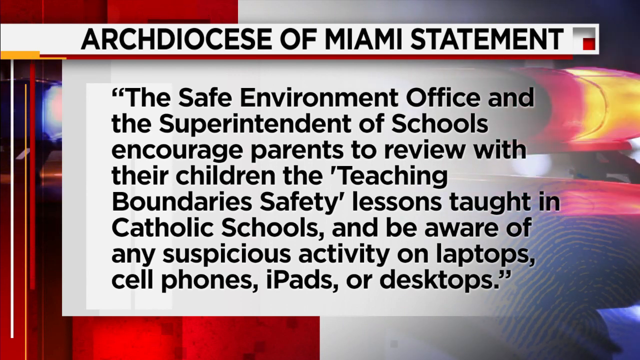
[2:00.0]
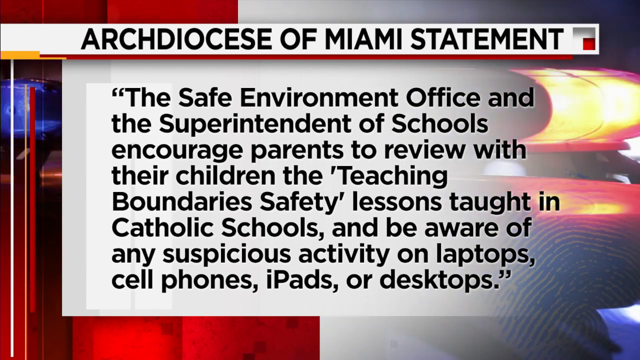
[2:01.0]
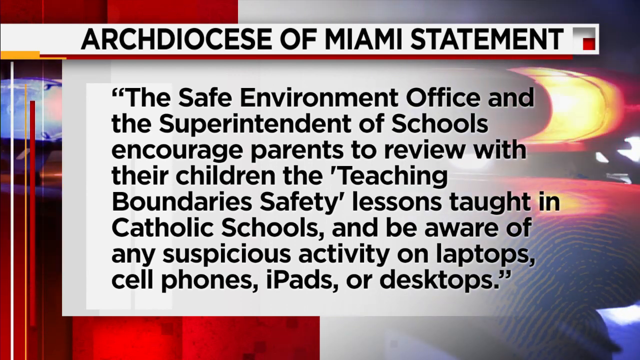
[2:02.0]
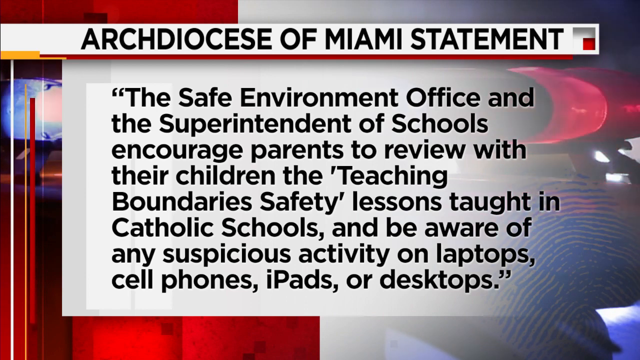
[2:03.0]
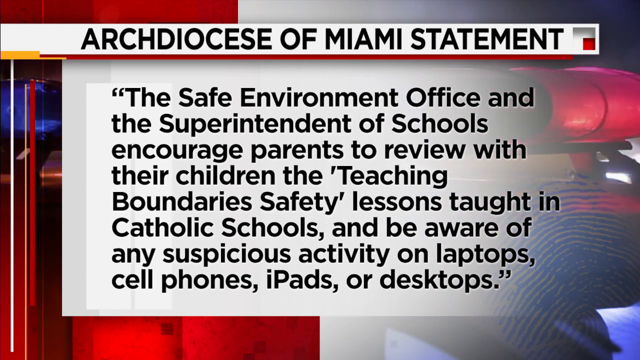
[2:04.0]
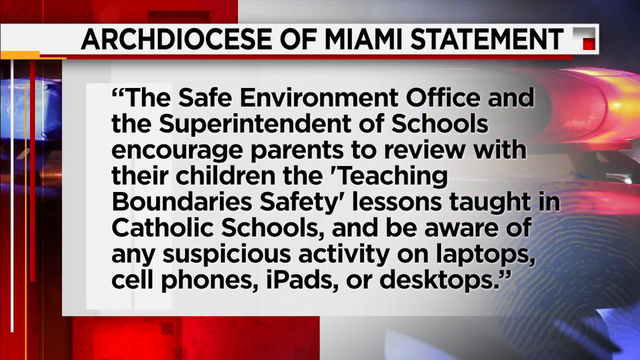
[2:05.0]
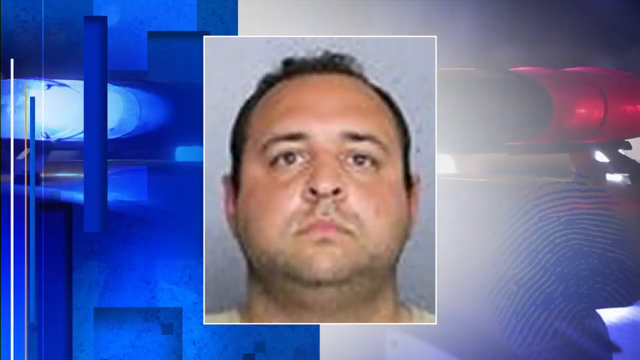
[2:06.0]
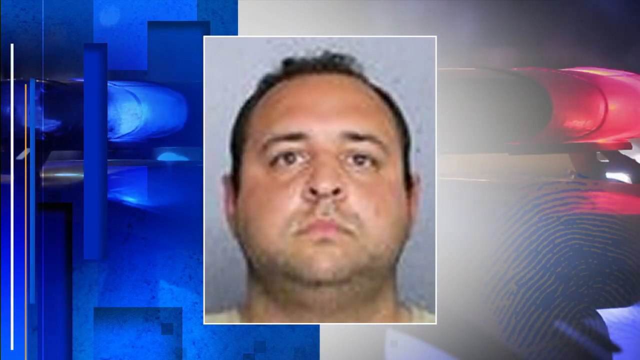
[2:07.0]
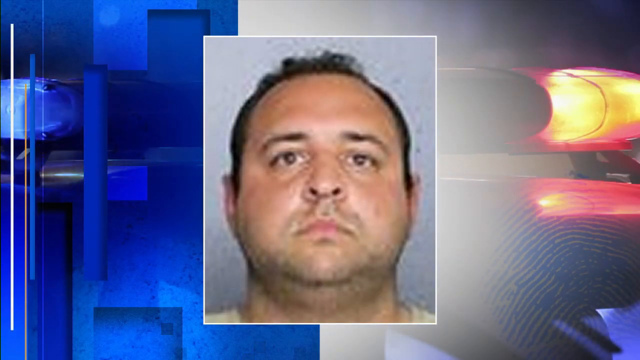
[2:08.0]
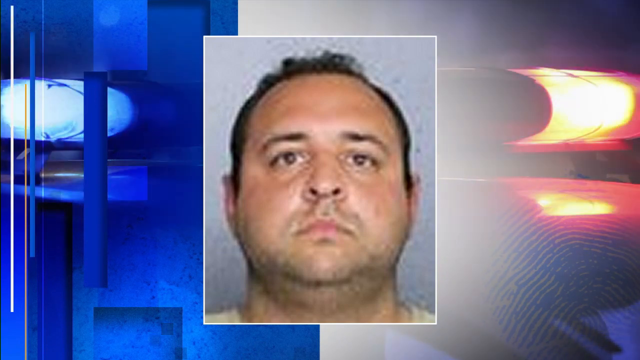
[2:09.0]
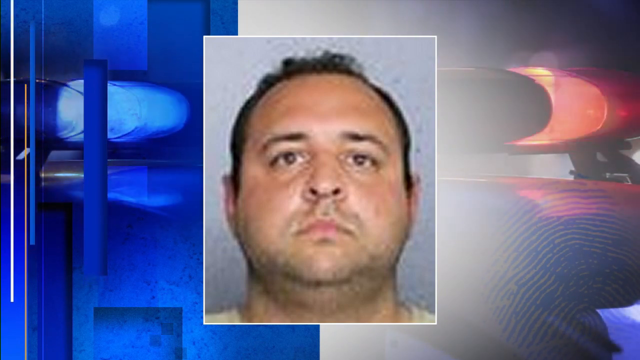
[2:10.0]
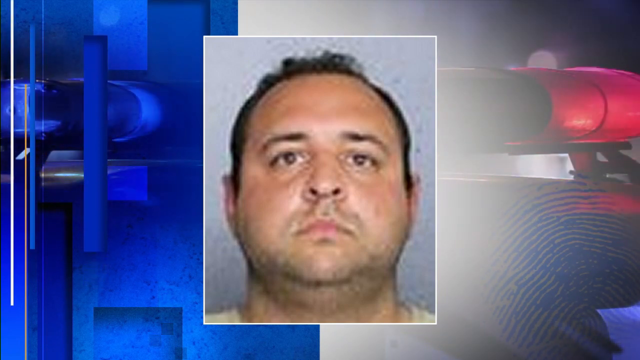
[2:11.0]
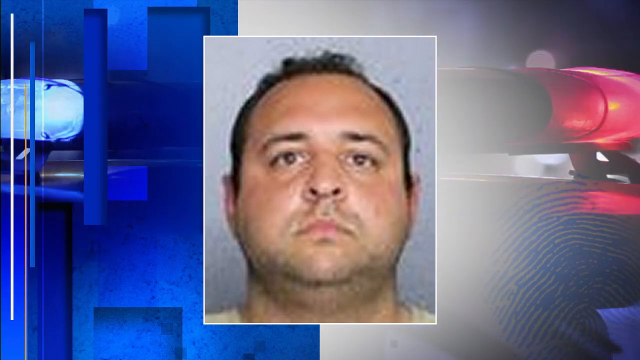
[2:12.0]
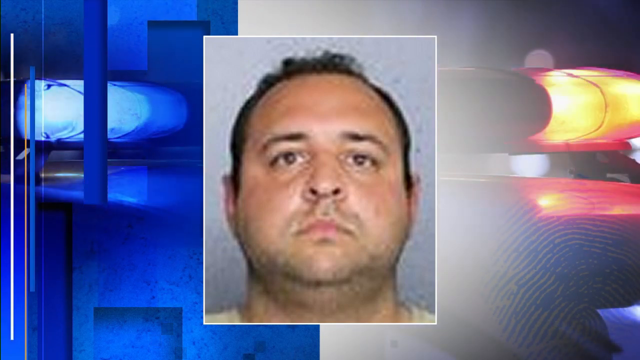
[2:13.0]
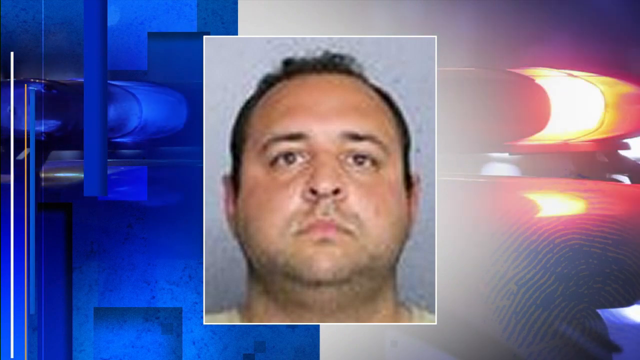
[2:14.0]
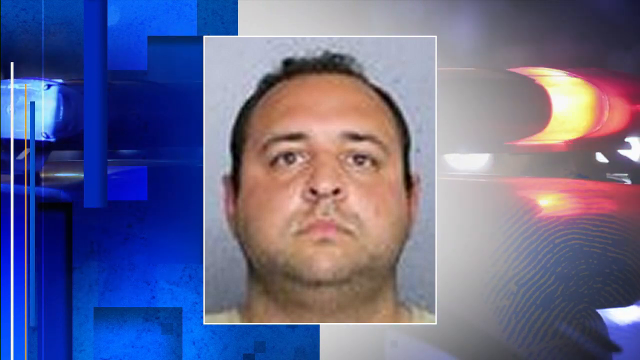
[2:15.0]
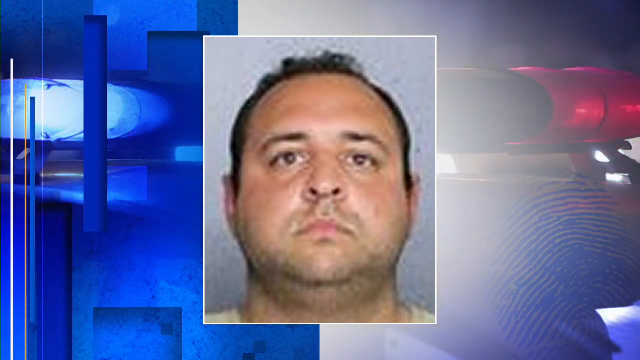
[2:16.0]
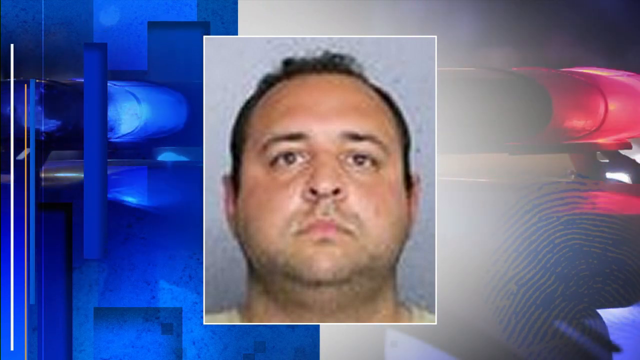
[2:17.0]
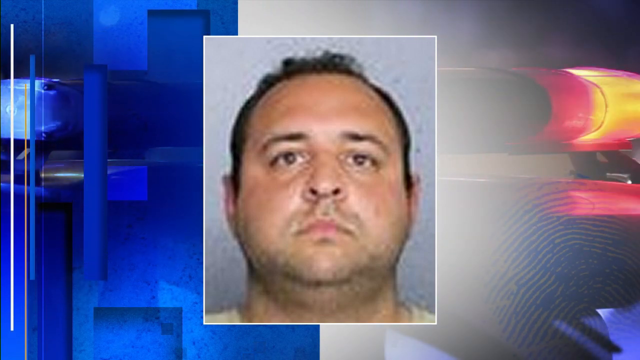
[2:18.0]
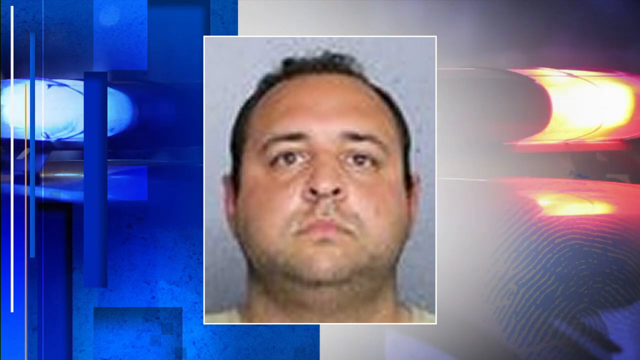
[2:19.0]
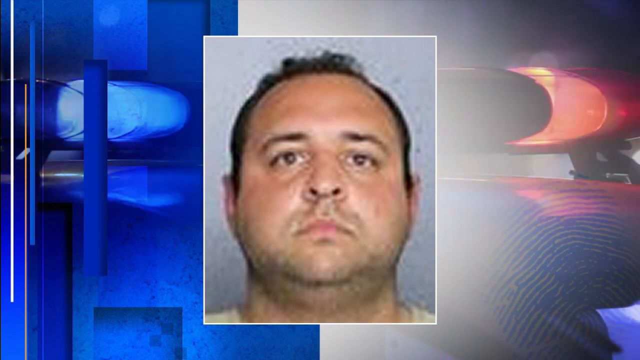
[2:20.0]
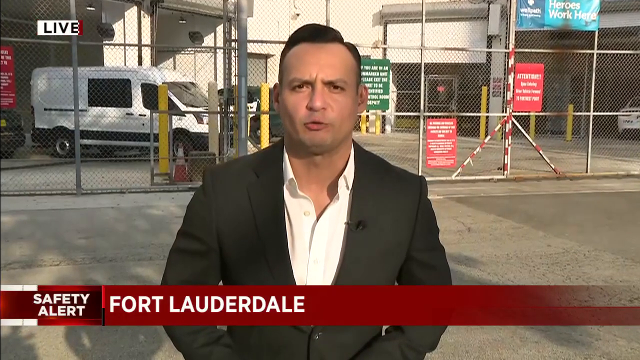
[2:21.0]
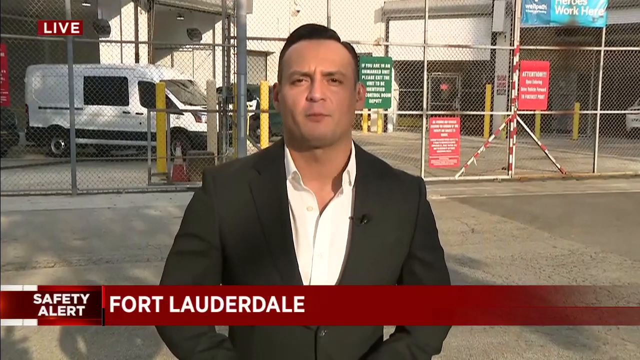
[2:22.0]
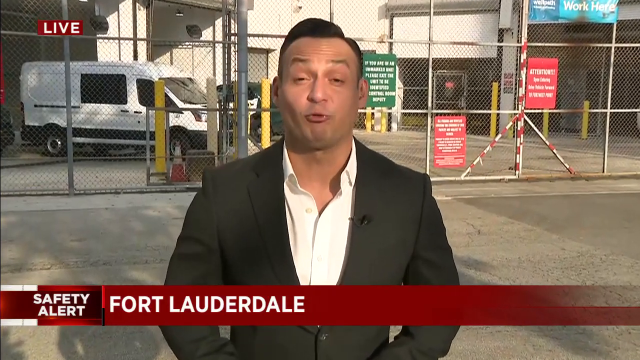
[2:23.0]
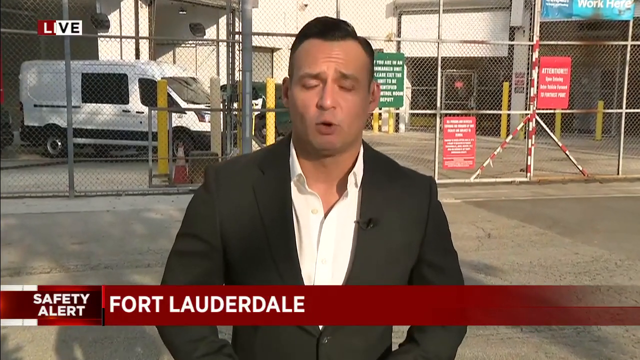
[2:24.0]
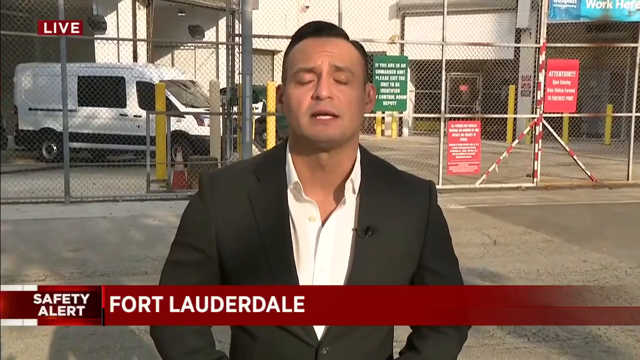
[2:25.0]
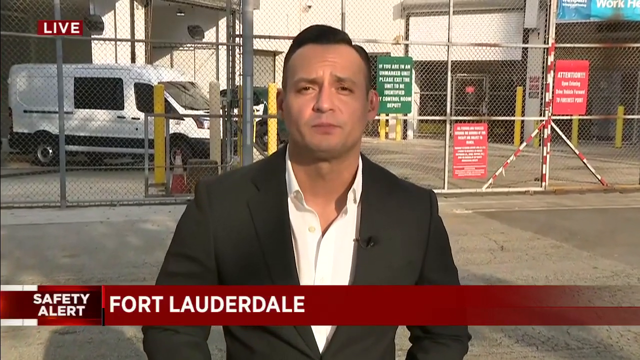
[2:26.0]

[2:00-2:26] The police department in Fort Lauderdale is shown from what looks like the back entrance. The final message reads: "The Safe Environment Office and the Superintendent of Schools encourage parents to review with children the teaching safety lessons taught in all these schools and be aware of any suspicious activity on laptops, cell phones, iPads, or desktops."